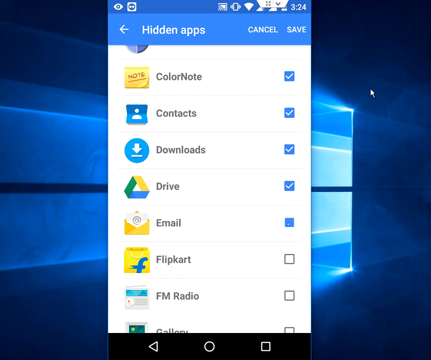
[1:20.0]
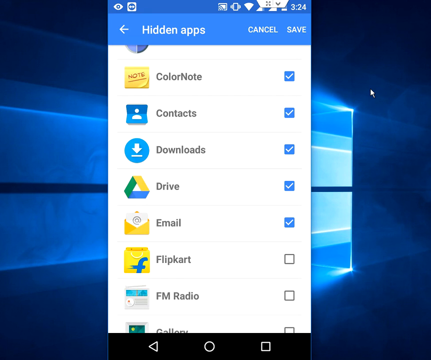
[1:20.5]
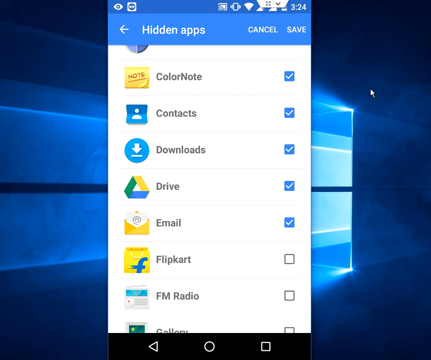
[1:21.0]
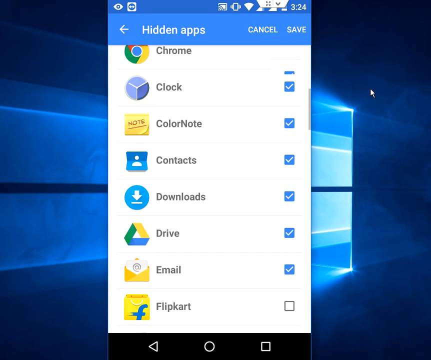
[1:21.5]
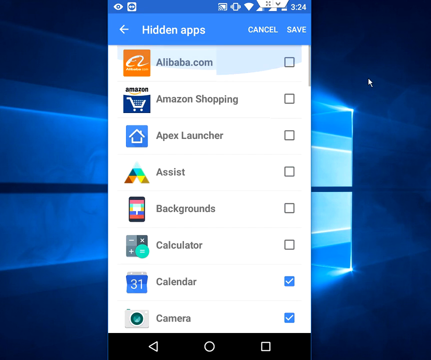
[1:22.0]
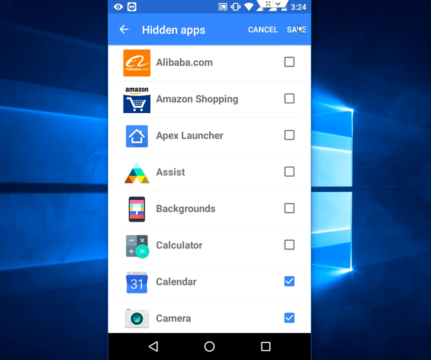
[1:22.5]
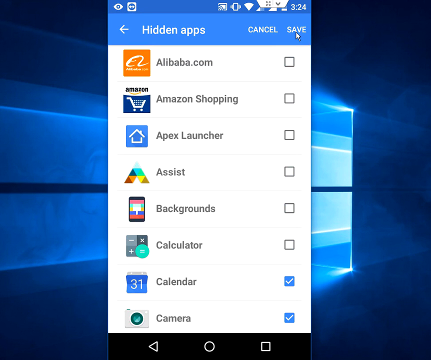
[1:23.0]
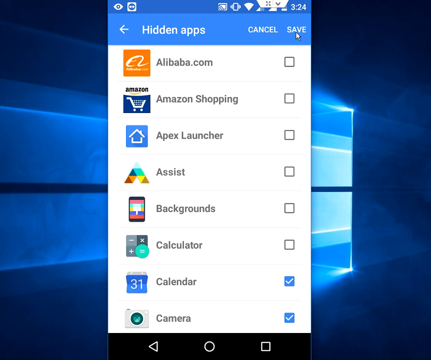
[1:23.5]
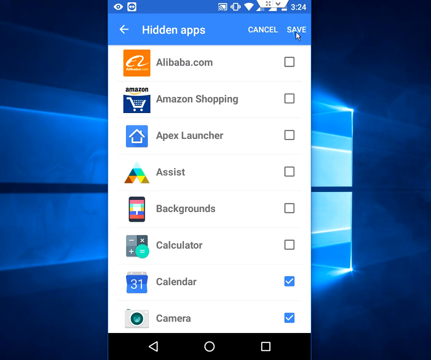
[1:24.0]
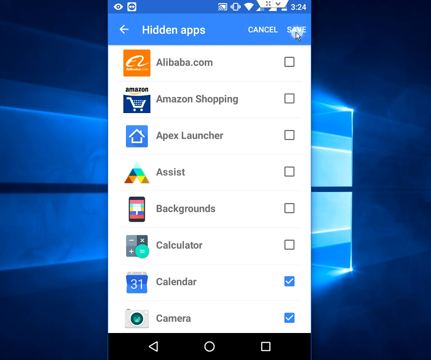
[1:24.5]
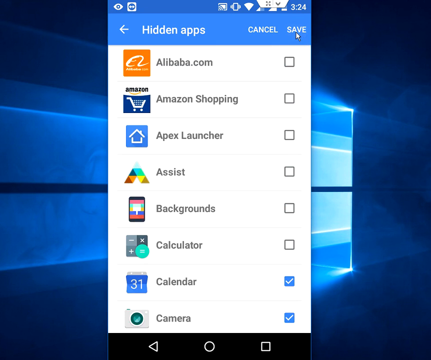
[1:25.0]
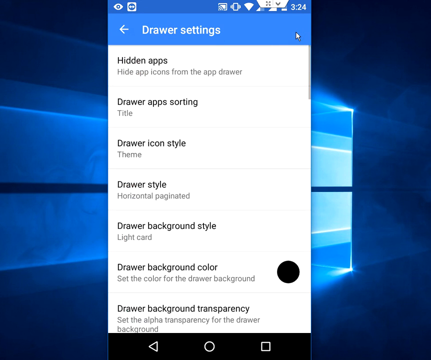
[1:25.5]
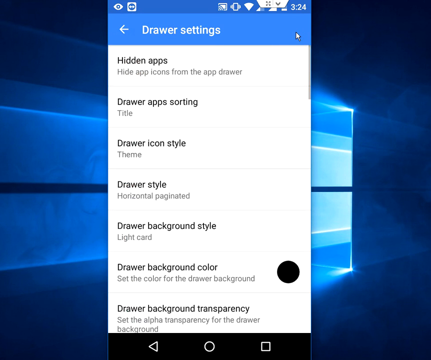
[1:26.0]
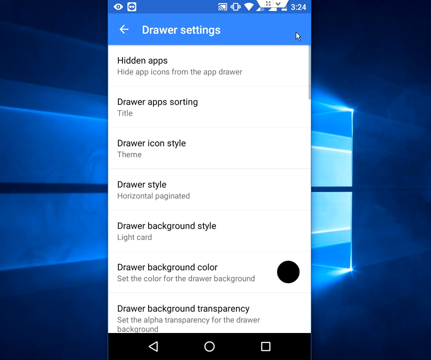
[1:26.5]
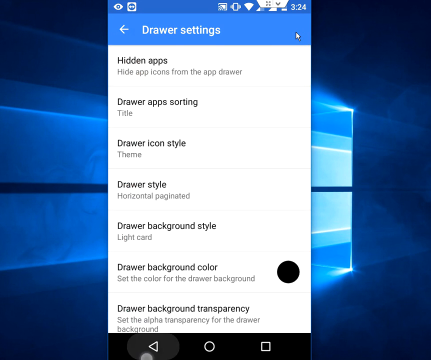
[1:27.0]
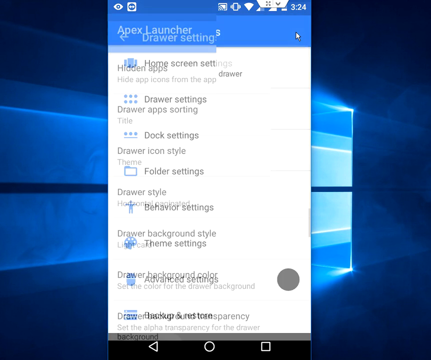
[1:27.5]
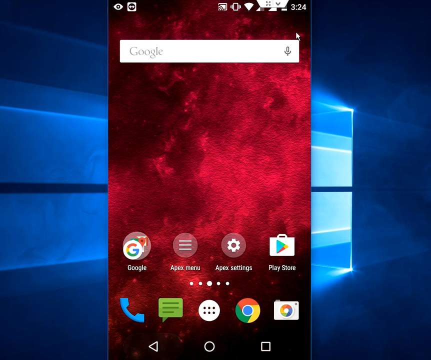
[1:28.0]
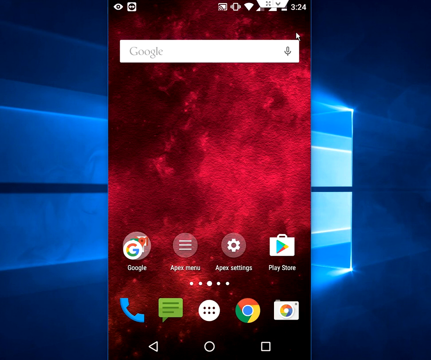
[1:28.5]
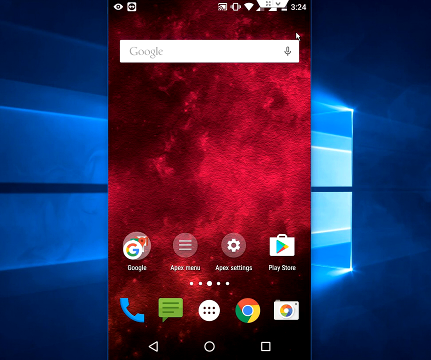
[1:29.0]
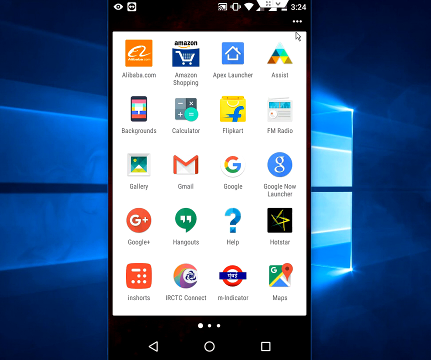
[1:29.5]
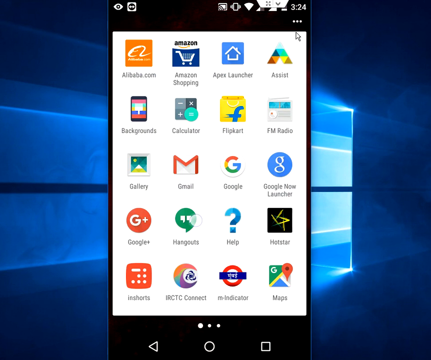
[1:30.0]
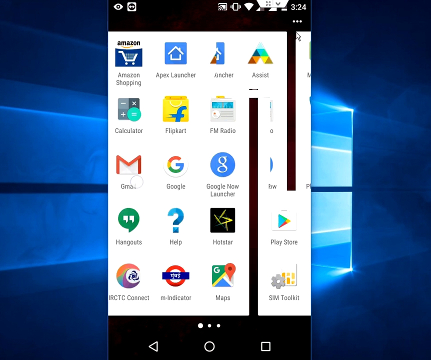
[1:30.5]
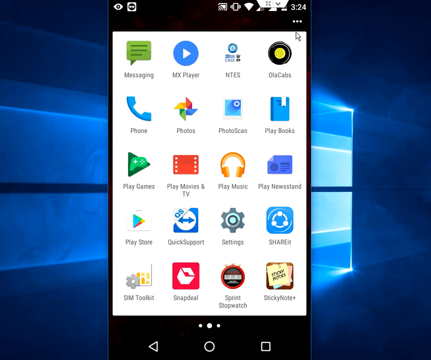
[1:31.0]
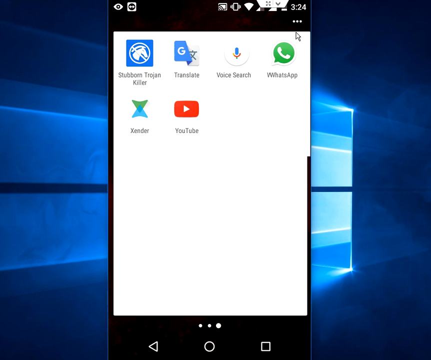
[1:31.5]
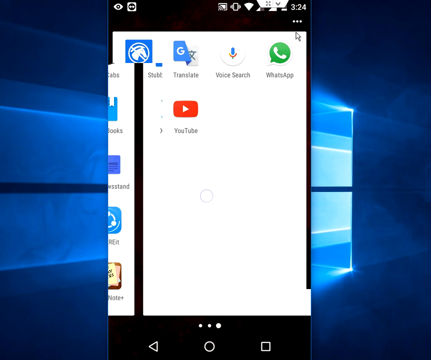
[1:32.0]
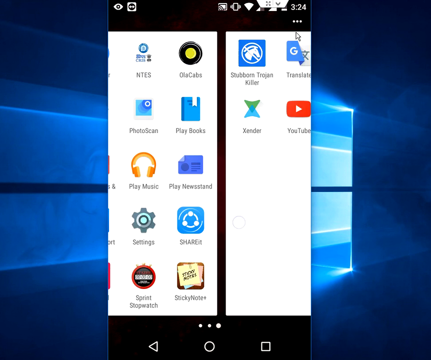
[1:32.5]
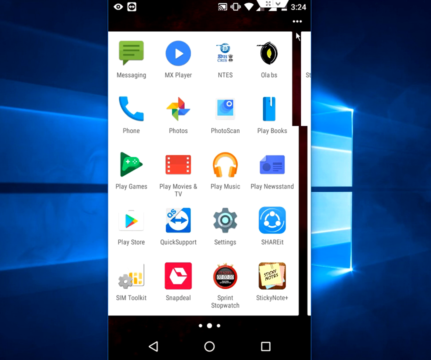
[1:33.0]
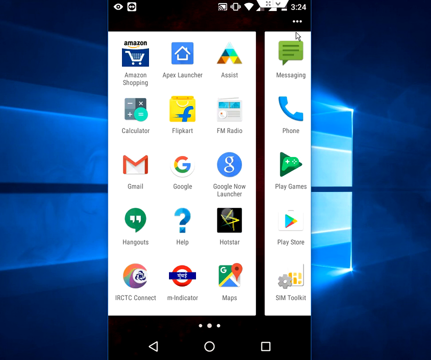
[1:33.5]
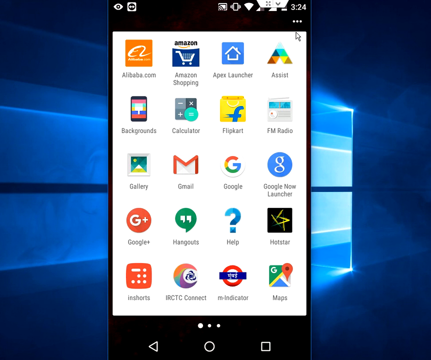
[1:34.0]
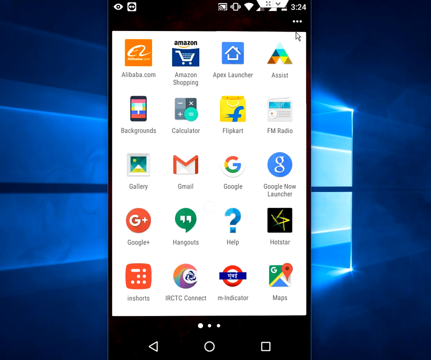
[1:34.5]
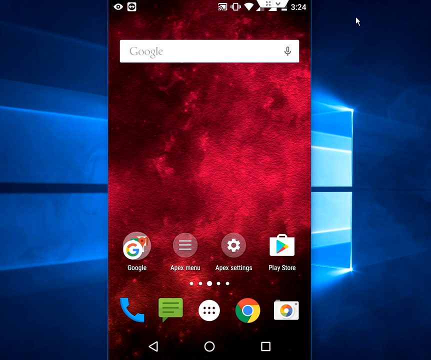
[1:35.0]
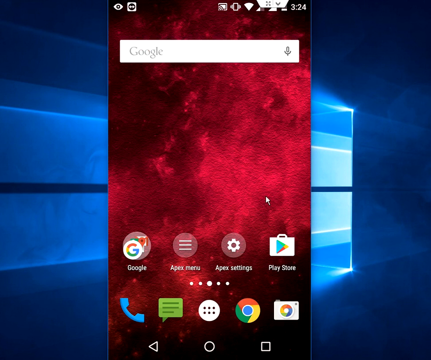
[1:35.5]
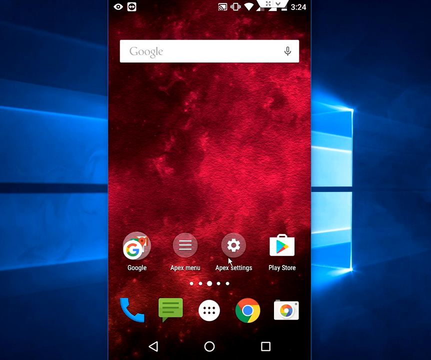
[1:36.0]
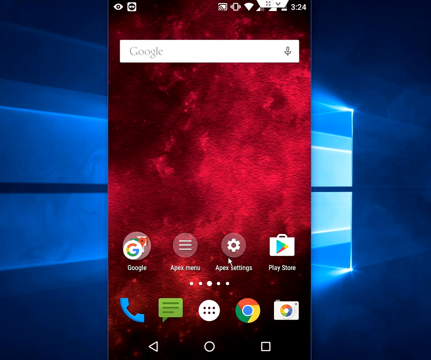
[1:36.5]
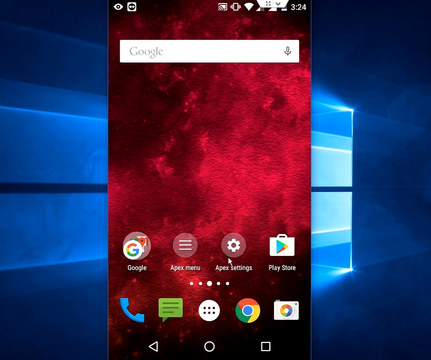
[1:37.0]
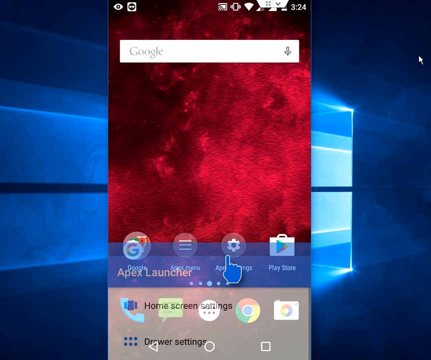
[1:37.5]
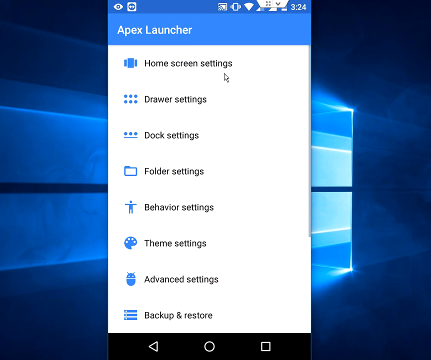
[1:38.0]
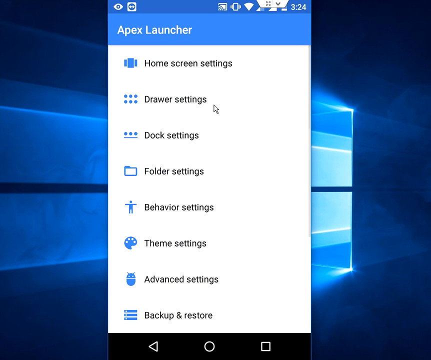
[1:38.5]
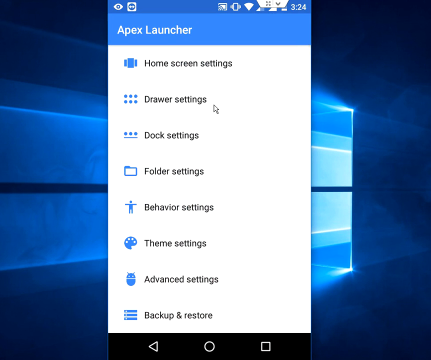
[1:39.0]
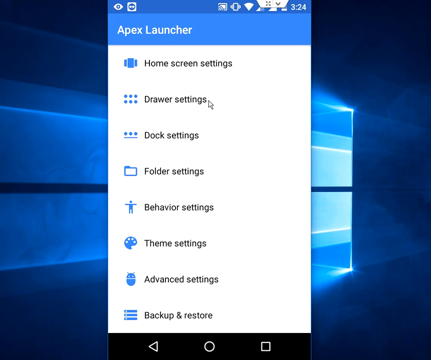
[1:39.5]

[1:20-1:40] The user starts selecting apps to hide, with a number of them highlighted from Calendar all the way down to Email, then scrolls up and clicks save. The view returns to drawer settings and then to the main screen, where the user opens the app section. From Email onward, where the list originally had the E's, those selected apps are now hidden, so apps such as Email no longer appear in the main app list. The user then leaves that view, clicks on Apex Settings again, and goes to Drawer Settings, where the selected apps appear to be Calendar, Camera, Clock, ColorNote, Contacts, Downloads, Drive, and Email.